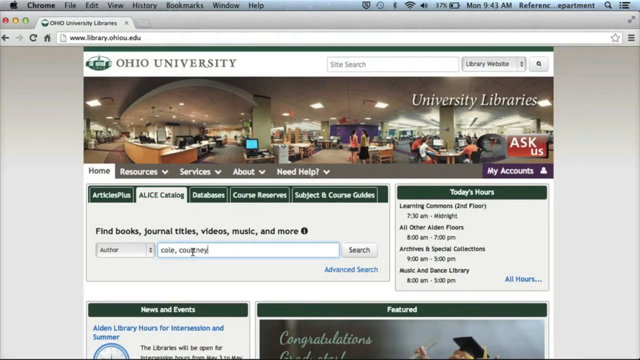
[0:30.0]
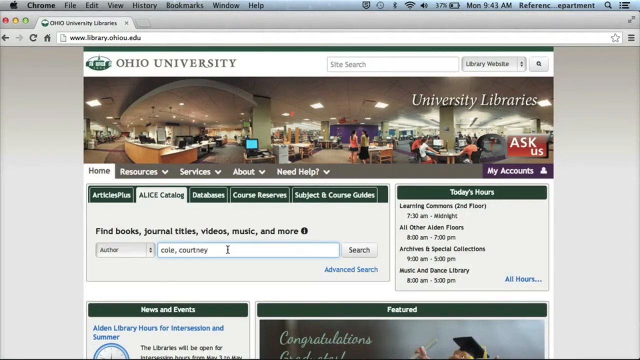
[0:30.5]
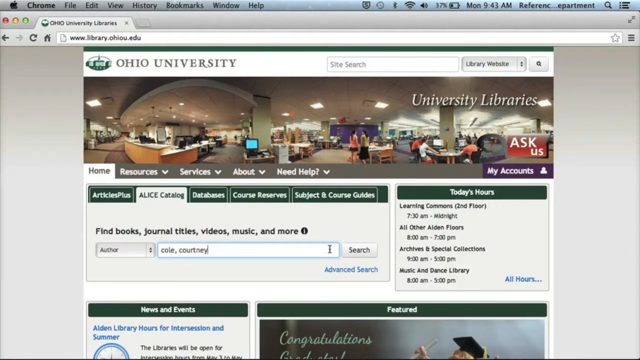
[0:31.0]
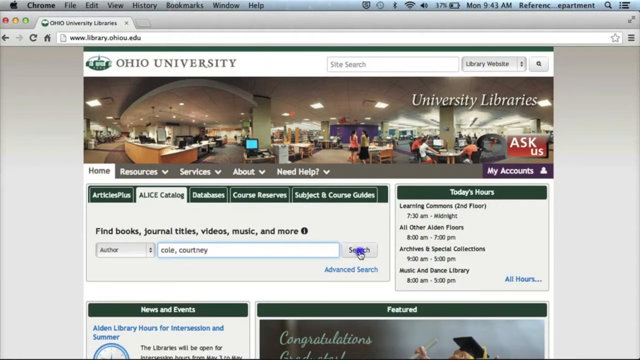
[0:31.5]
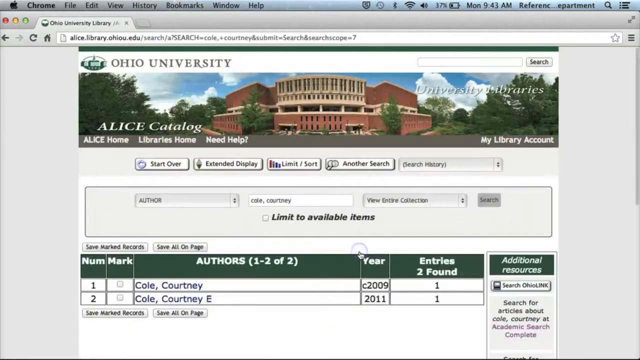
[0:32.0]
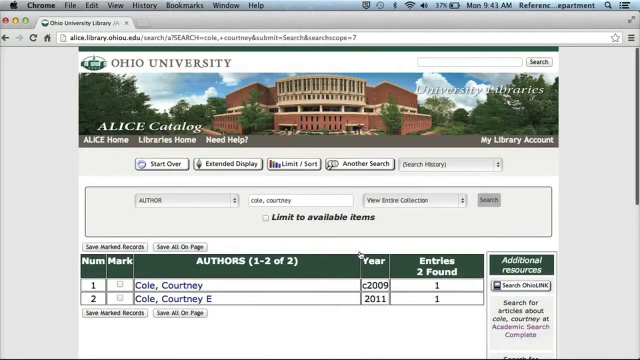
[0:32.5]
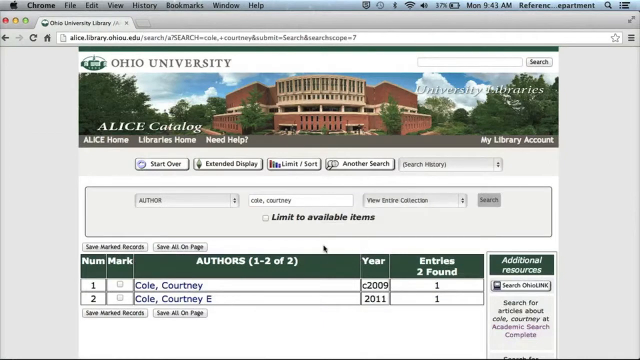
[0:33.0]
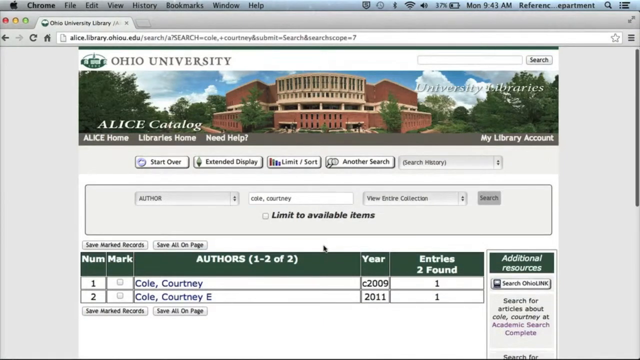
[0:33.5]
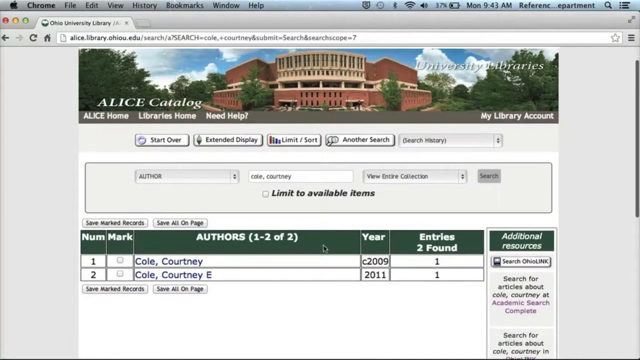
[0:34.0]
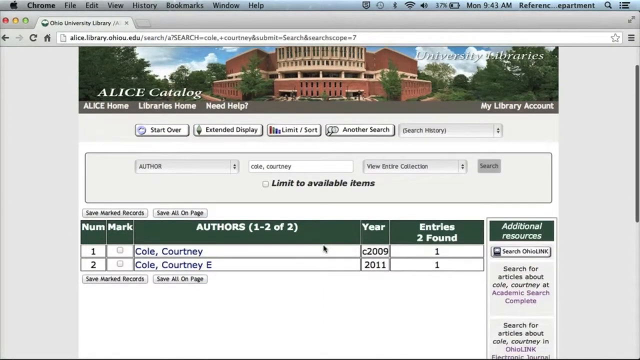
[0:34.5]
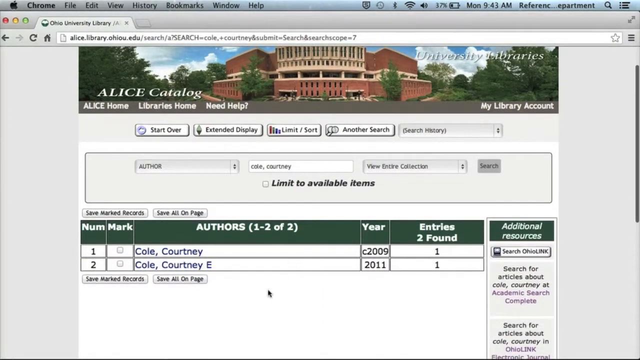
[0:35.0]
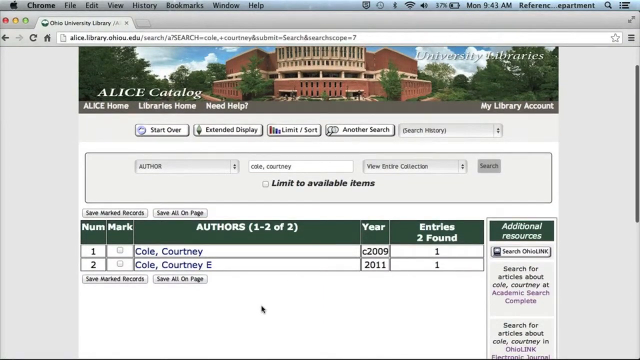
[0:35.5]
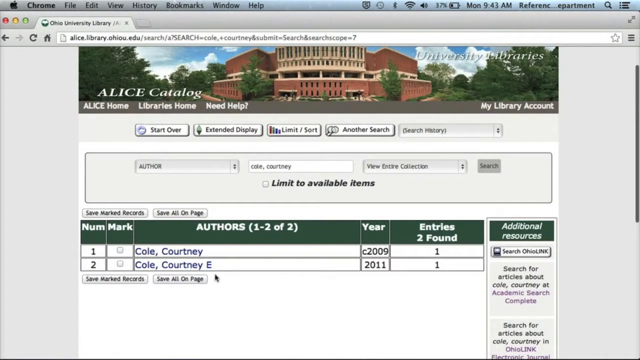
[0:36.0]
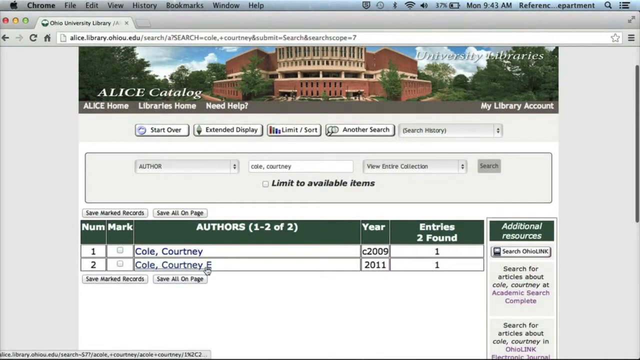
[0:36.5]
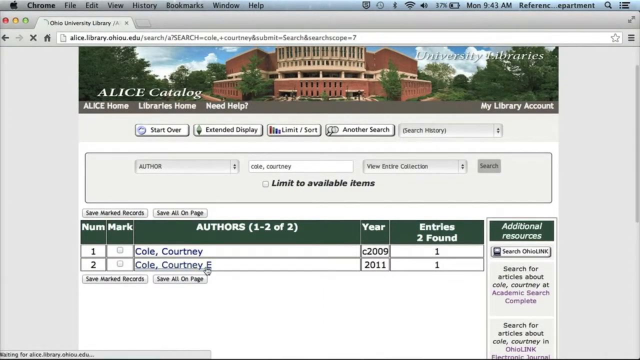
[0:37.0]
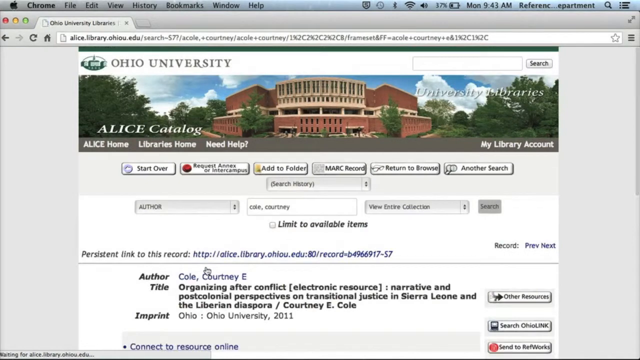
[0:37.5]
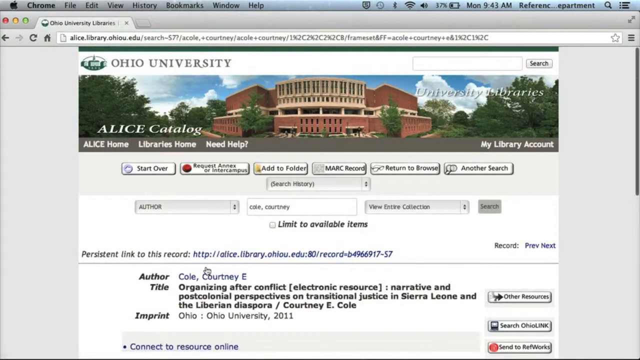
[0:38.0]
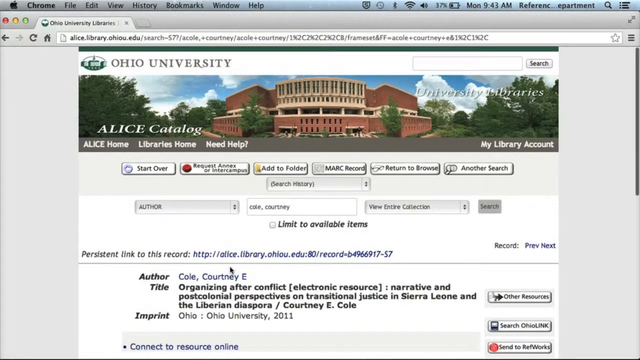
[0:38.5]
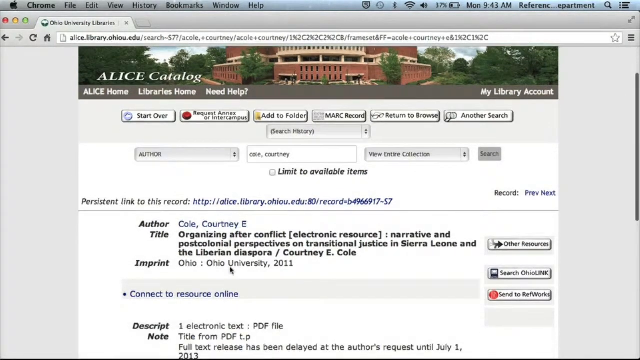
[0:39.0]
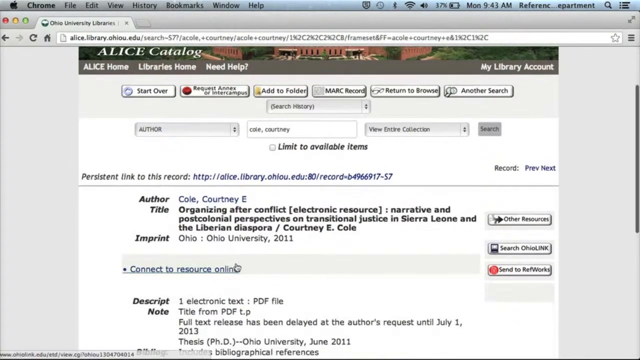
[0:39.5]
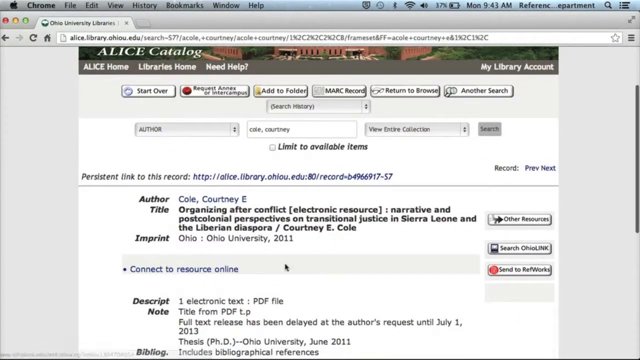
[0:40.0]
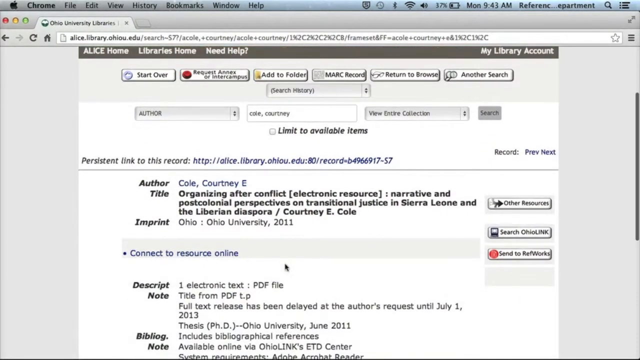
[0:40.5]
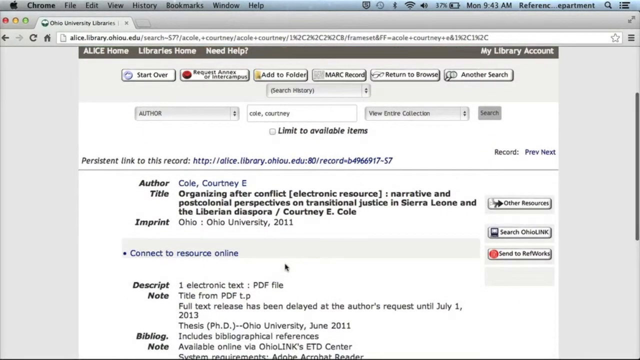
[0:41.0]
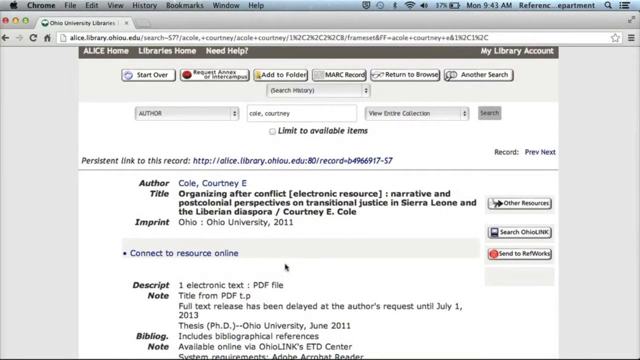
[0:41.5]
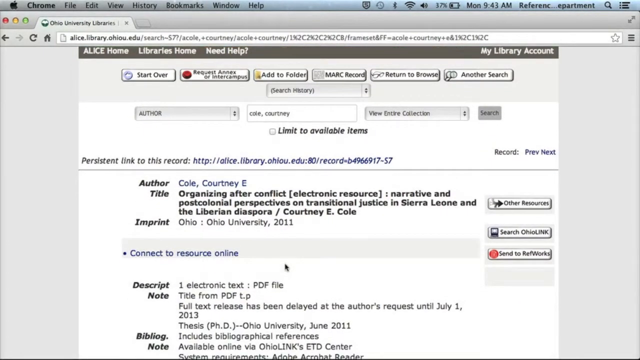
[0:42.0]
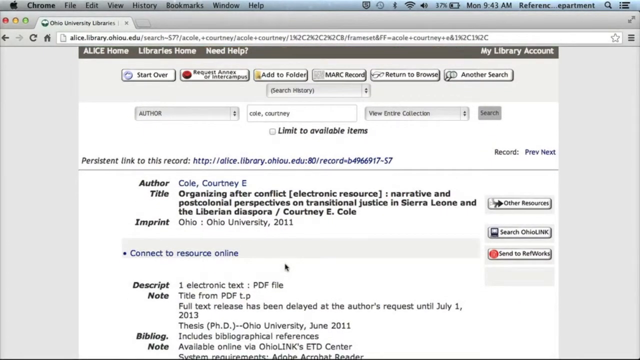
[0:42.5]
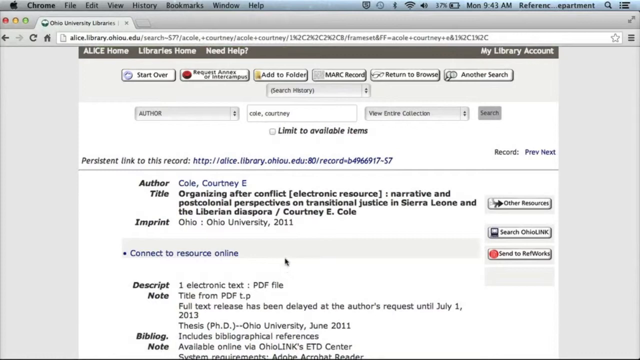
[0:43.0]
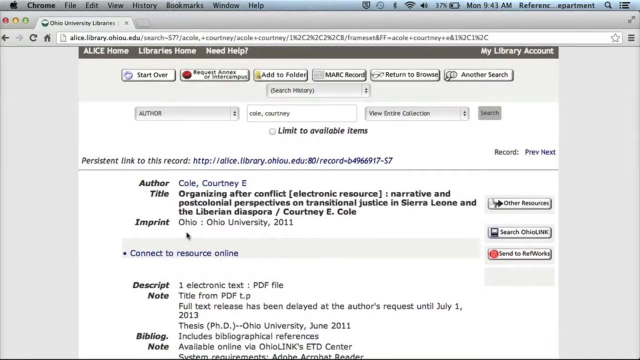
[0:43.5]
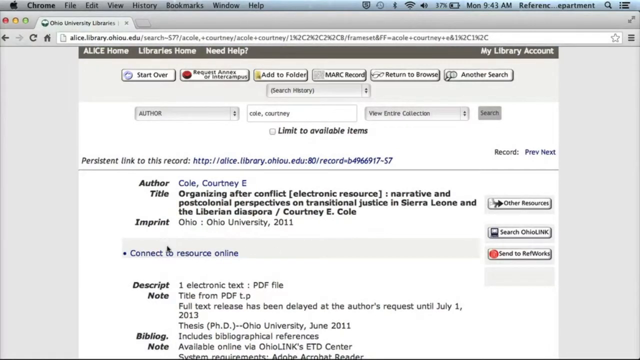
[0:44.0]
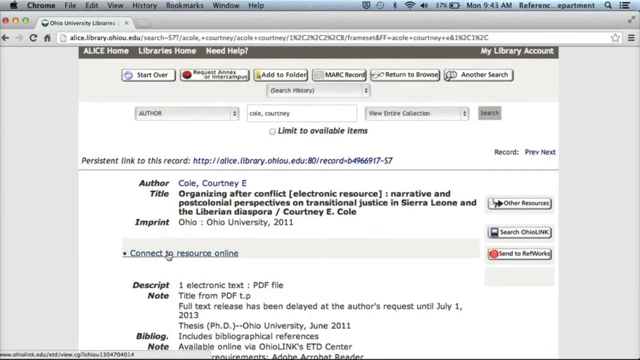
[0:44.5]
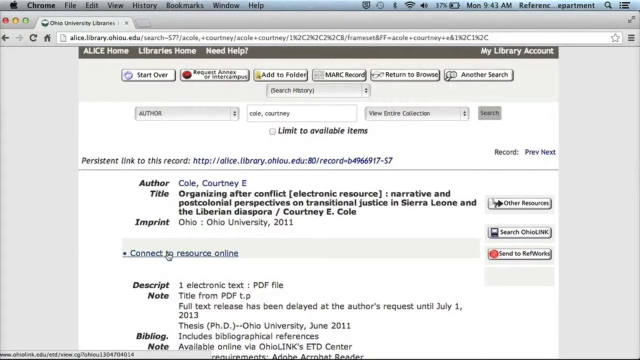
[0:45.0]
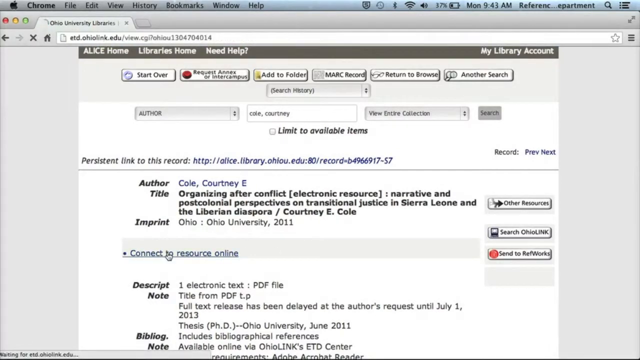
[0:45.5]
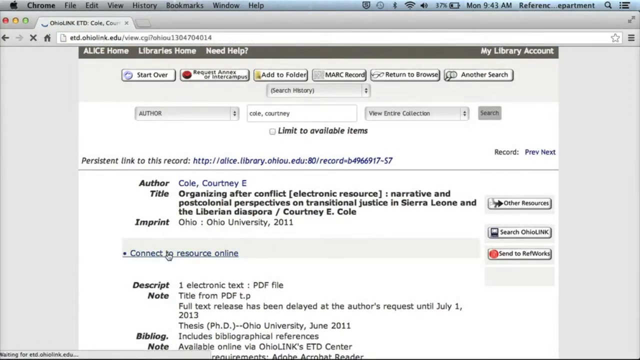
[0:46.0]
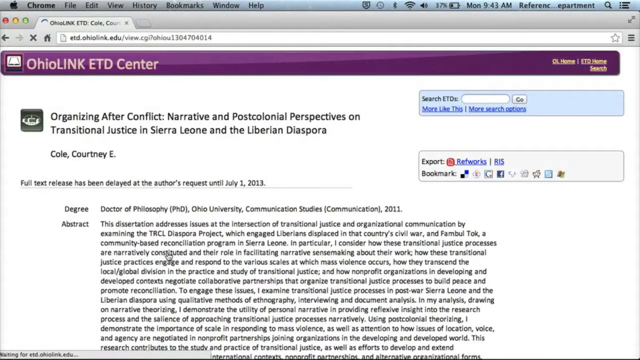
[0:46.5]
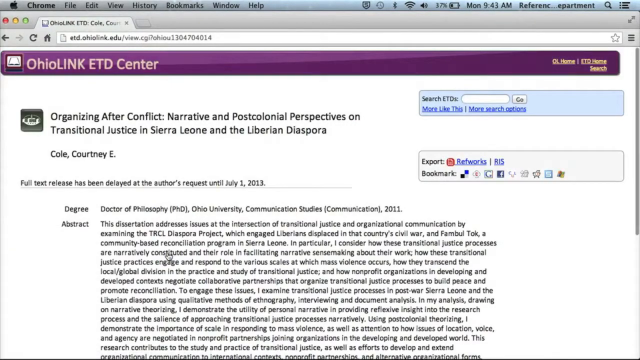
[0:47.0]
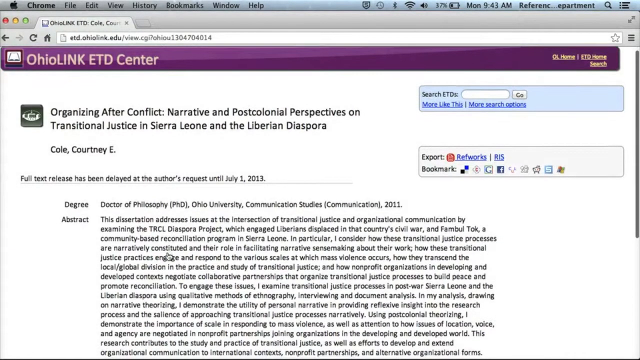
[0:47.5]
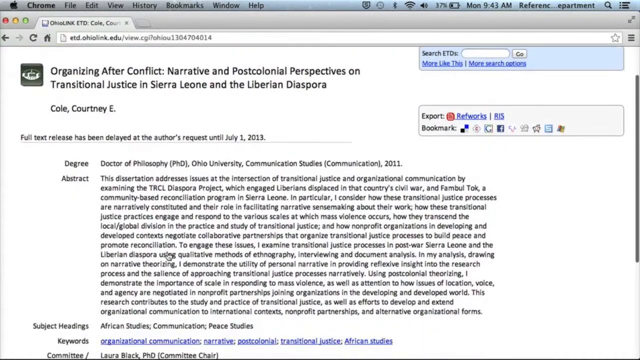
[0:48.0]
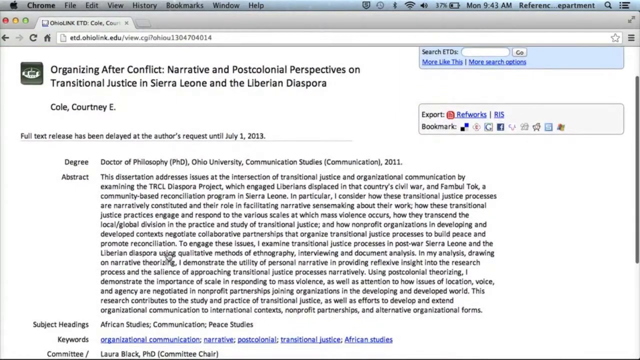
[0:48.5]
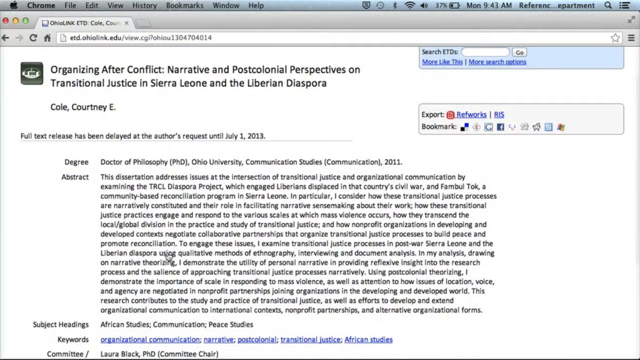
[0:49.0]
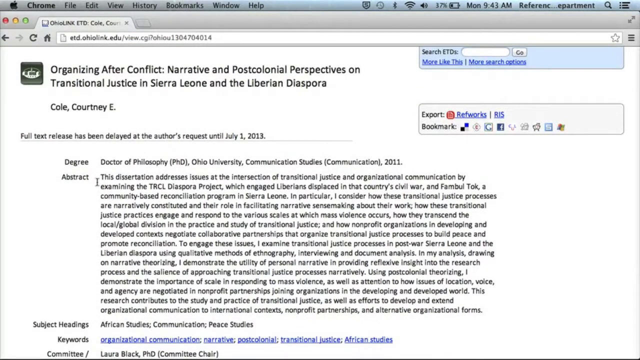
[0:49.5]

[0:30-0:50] The mouse cursor moves to the search button and presses it. The page changes to show a table of information, and the page appears to scroll down so the whole table is visible. The mouse moves to a blue clickable link reading "Cole, Courtney" and clicks it, leading to a new page that appears to show a specific work. The mouse moves around the page without clicking anything, and the page scrolls down to show more information. The mouse then clicks a blue link reading "connect to resource online," opening a new webpage that appears to show the abstract for the work, along with the degree it was for.